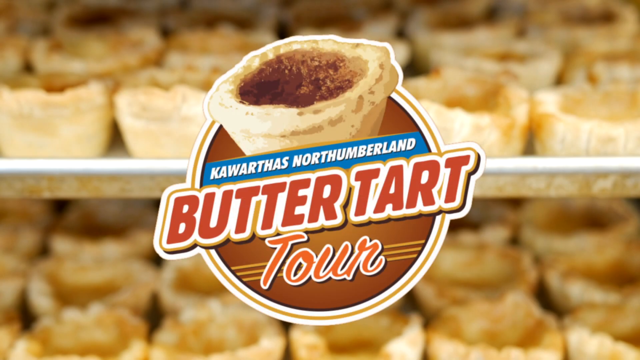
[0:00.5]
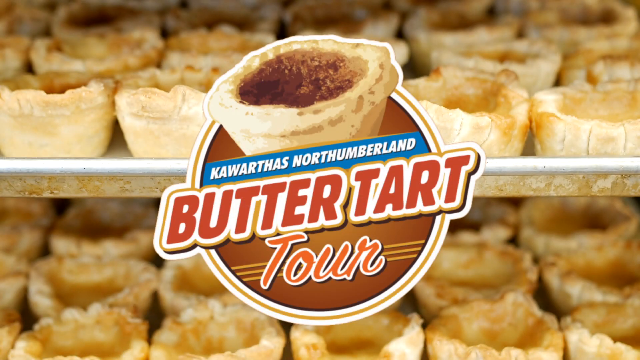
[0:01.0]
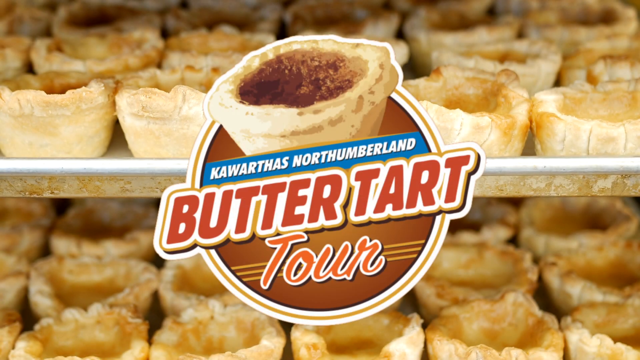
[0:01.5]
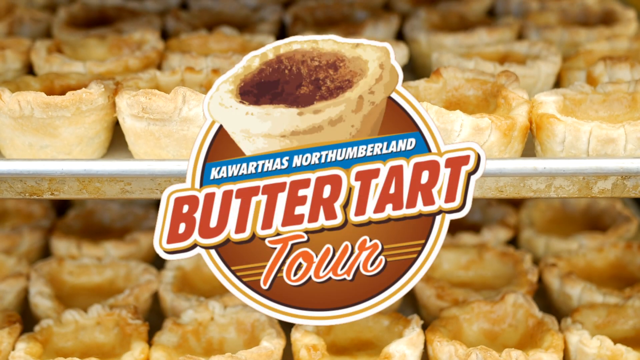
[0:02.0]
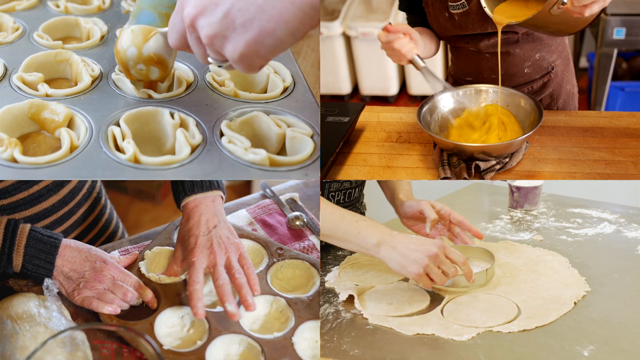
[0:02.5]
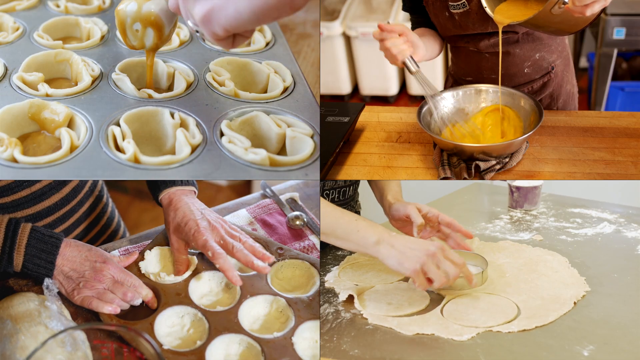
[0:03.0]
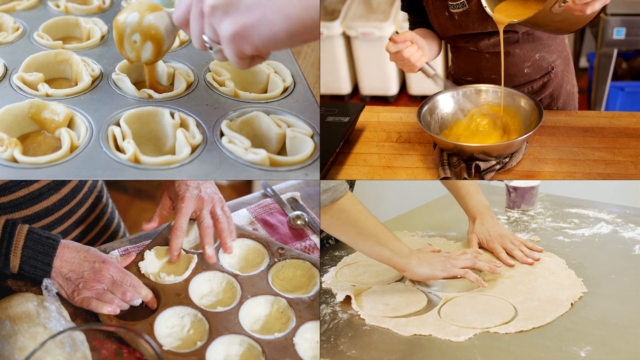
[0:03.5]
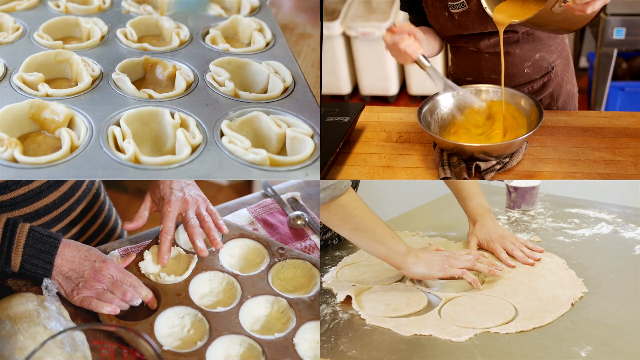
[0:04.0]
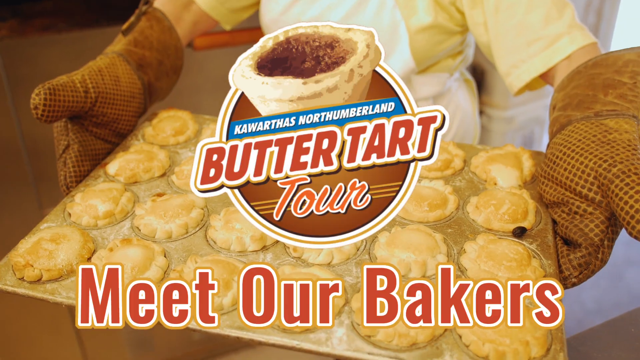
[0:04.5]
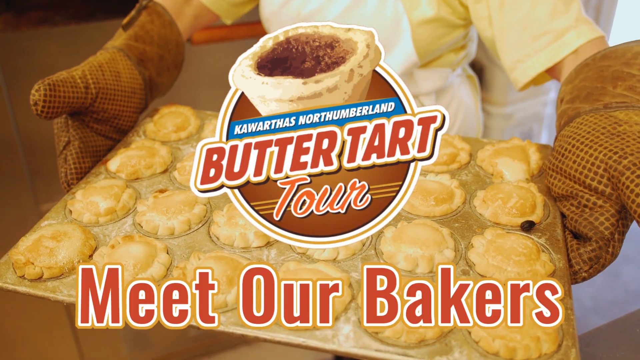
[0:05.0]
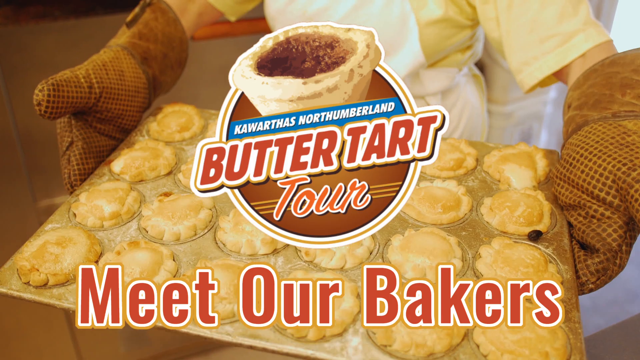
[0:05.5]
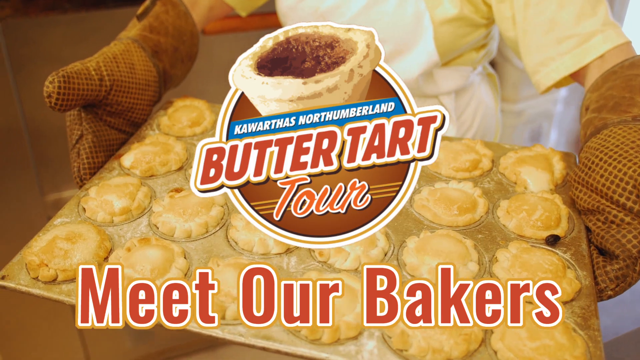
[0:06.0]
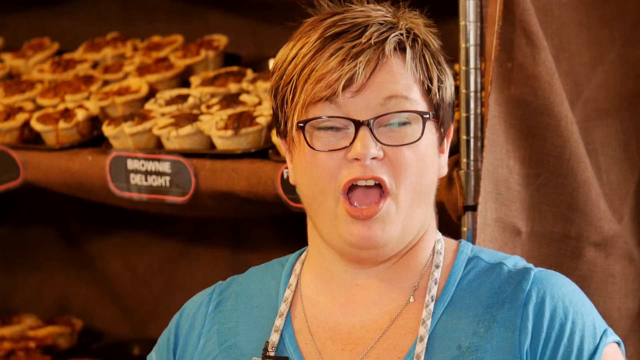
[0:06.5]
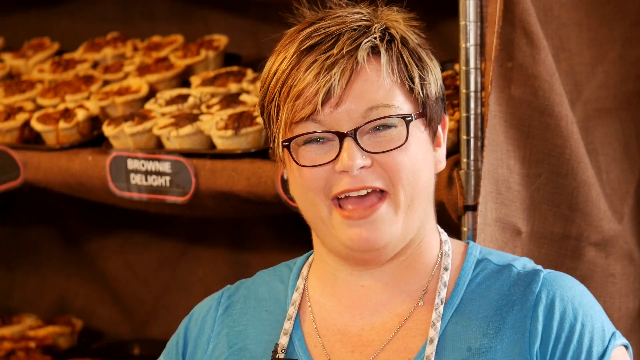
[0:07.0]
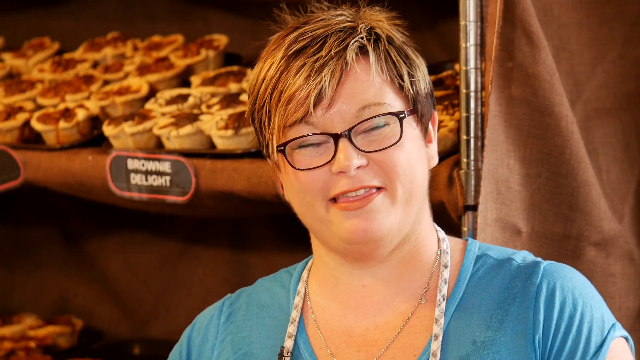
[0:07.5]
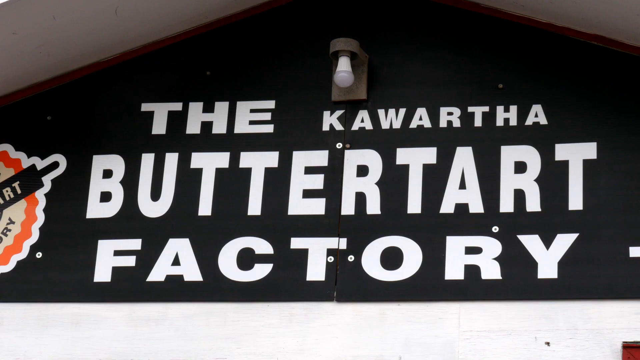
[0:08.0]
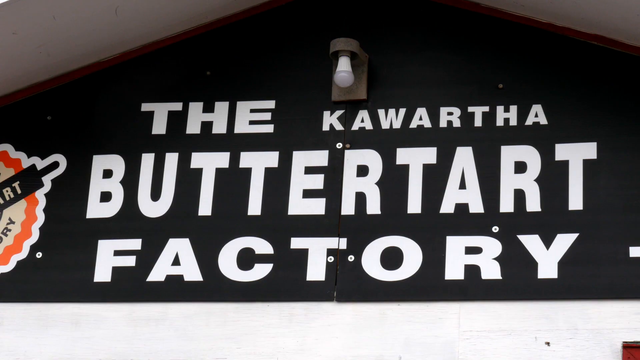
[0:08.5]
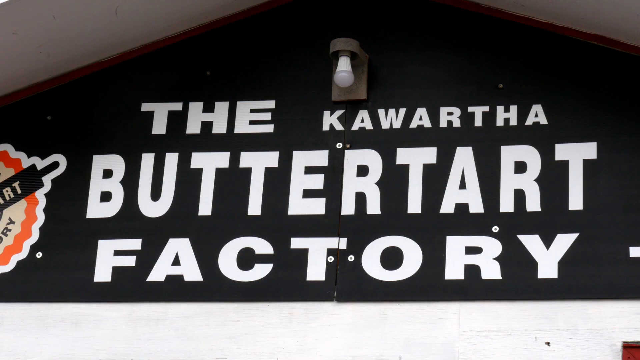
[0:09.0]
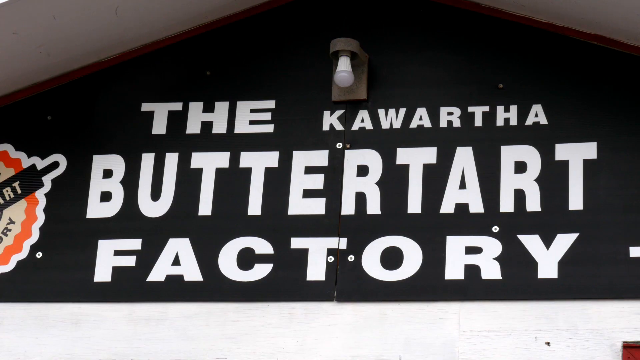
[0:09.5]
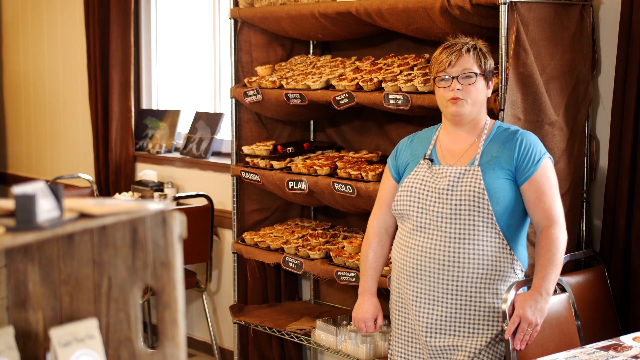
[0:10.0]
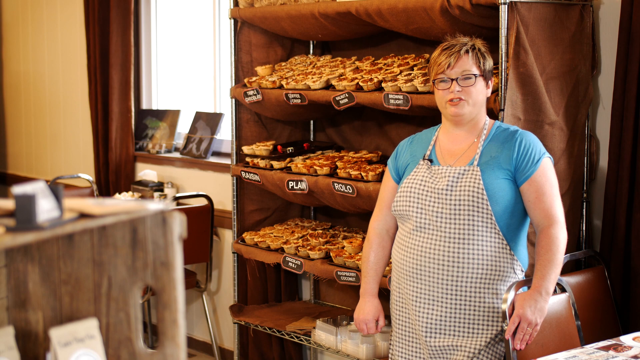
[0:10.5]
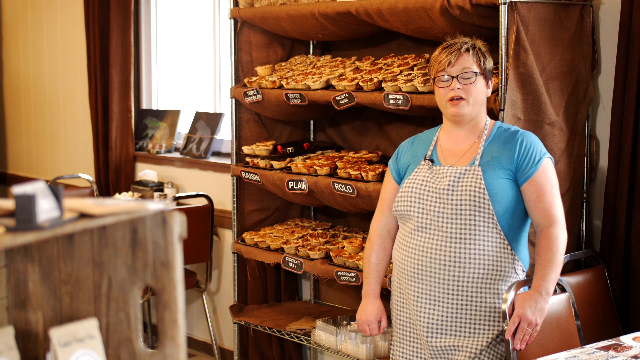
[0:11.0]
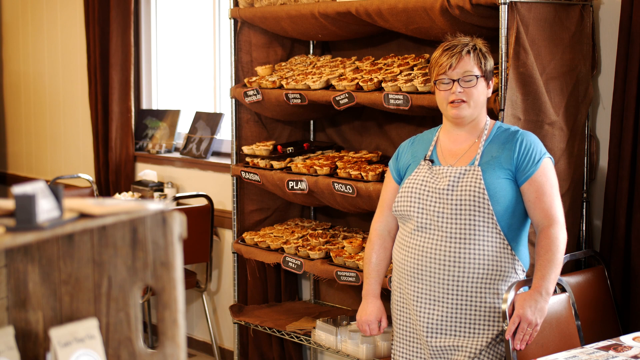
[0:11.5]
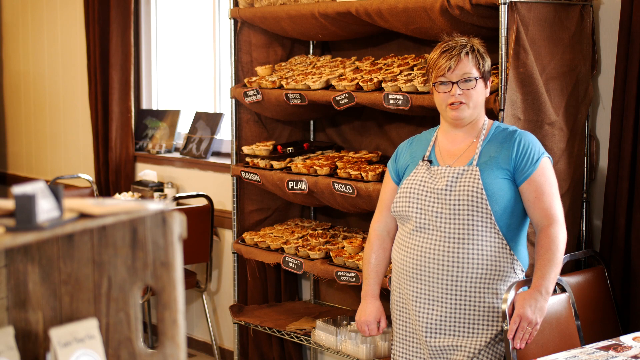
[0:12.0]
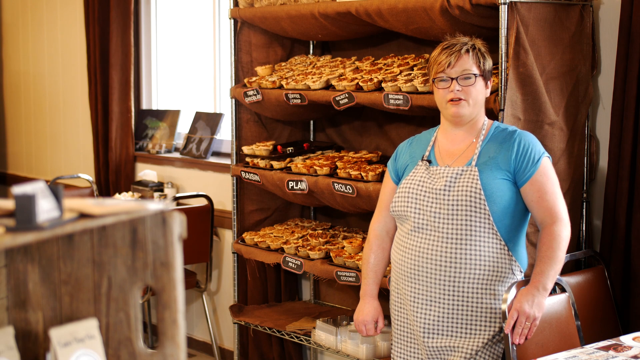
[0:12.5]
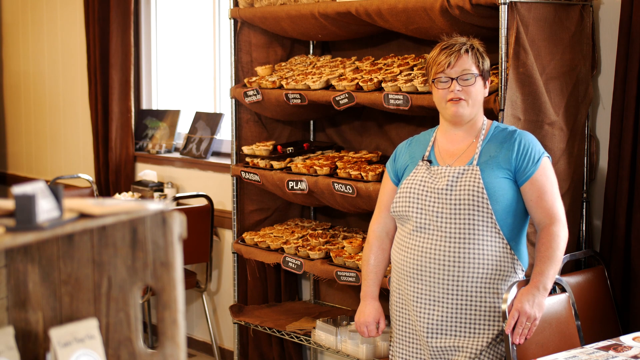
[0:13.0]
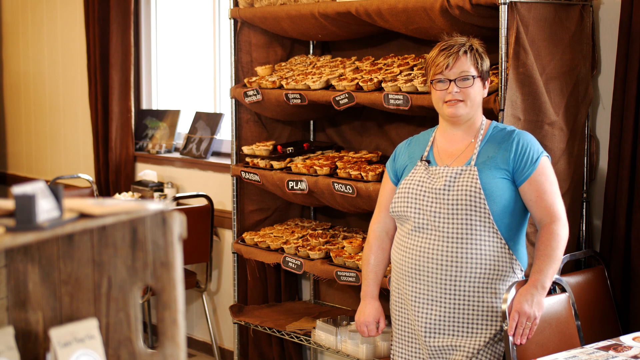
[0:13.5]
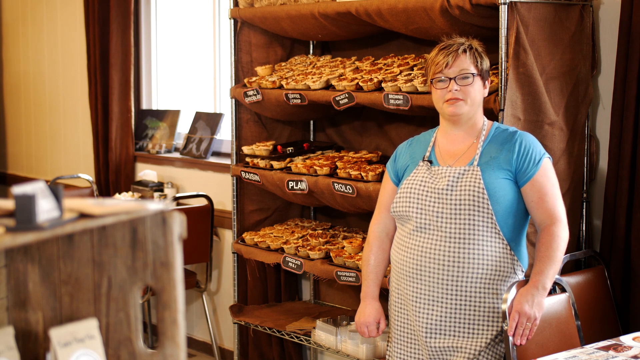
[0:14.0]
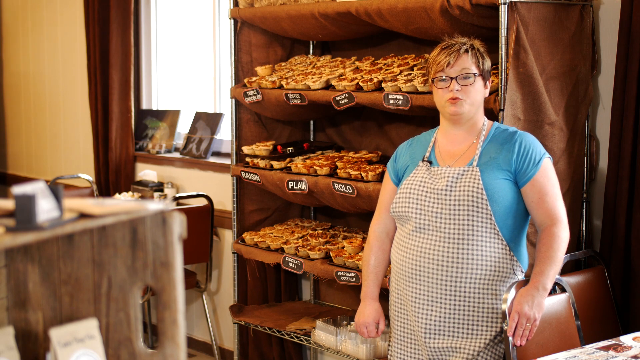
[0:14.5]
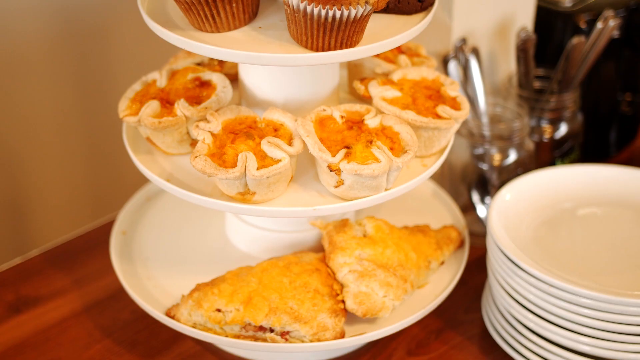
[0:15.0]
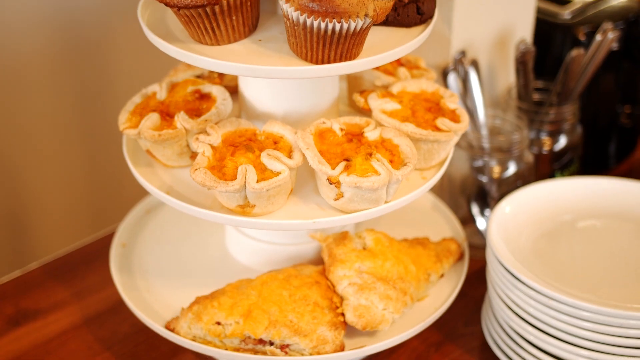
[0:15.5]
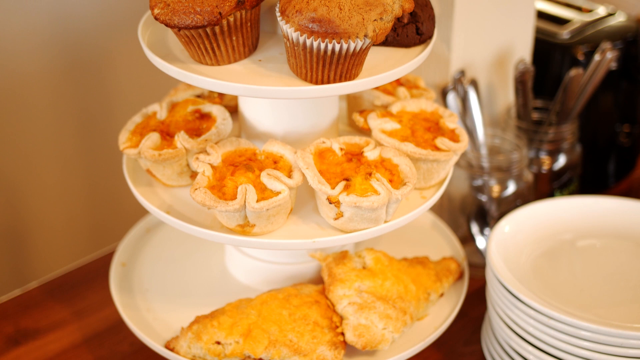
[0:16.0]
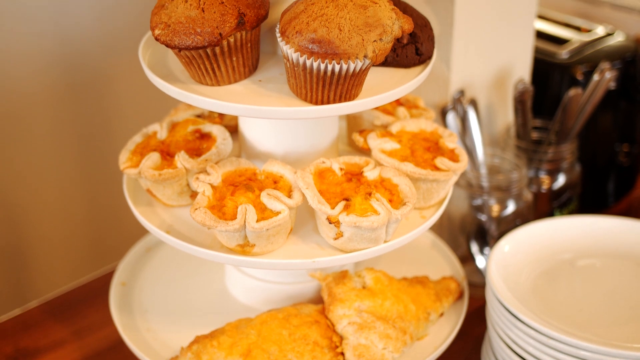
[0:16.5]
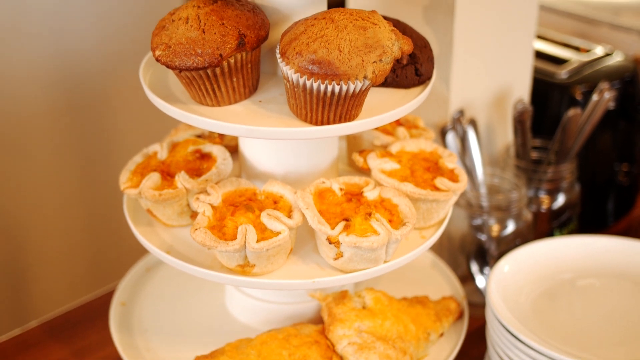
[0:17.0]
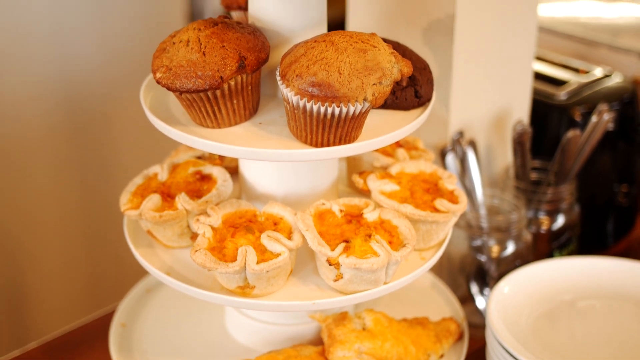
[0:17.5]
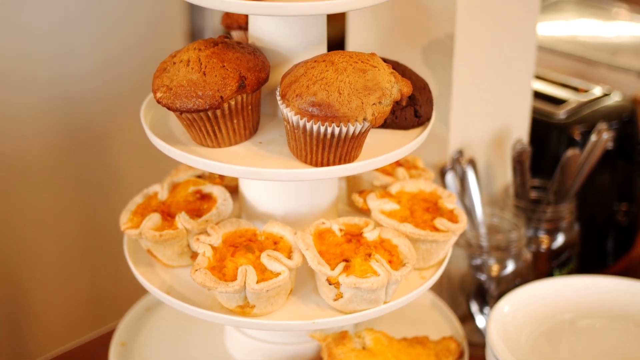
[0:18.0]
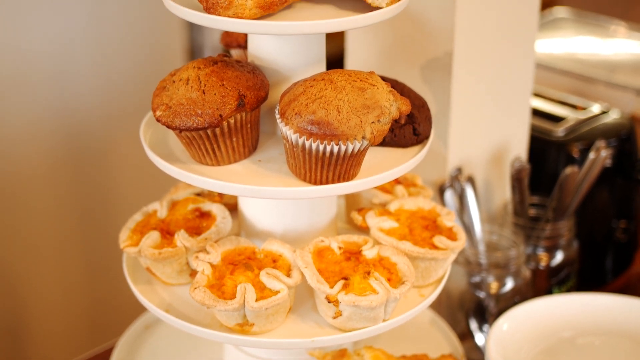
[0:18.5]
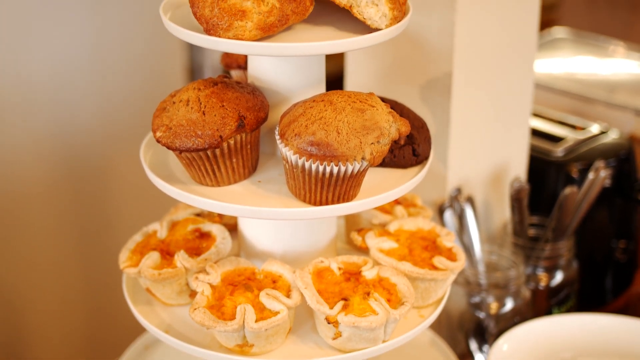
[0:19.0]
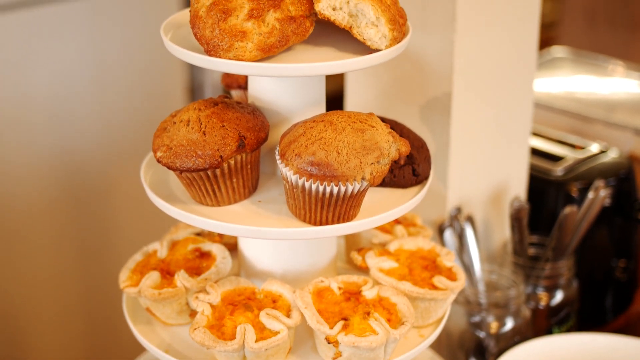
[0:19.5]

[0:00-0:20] Several different people are busy baking, and a woman shows the whole process she goes through. They are busy preparing their things: one is mixing, others are cutting, and others are putting everything into their bowls. They seem to enjoy what they are doing. Two bowls look the same. One of the bakers, a man wearing a blue shirt and spectacles, appears.